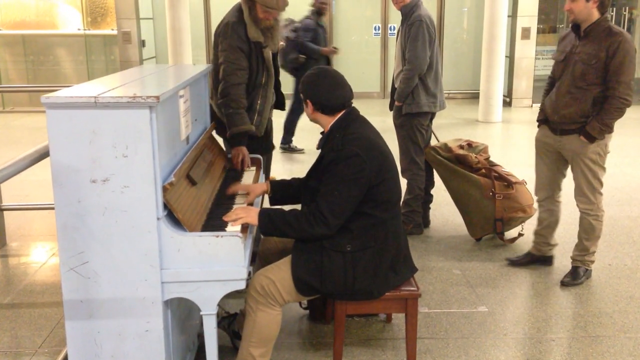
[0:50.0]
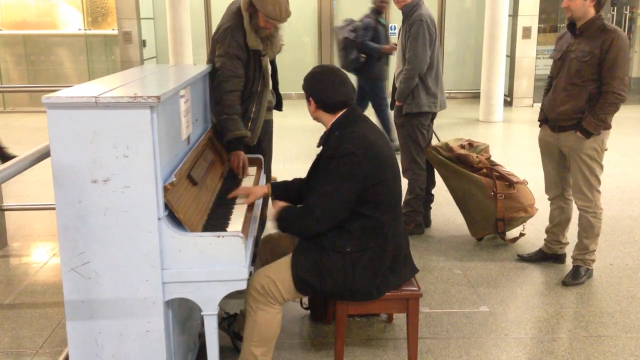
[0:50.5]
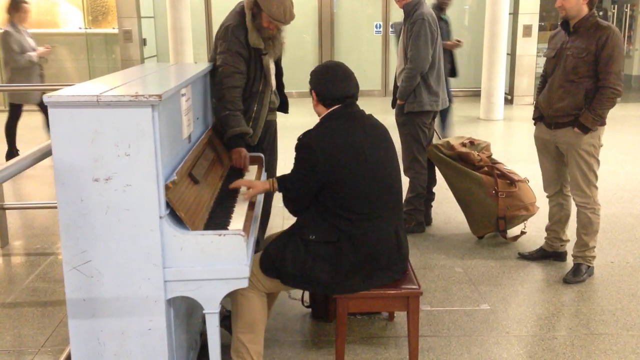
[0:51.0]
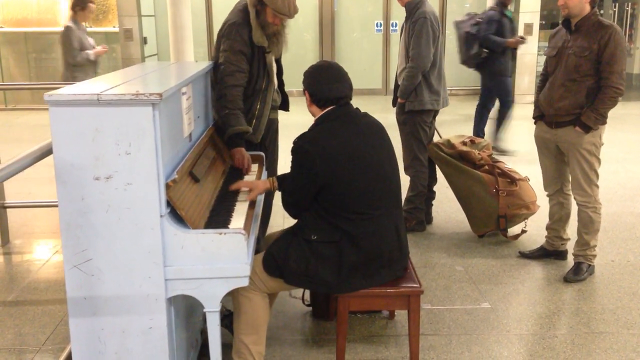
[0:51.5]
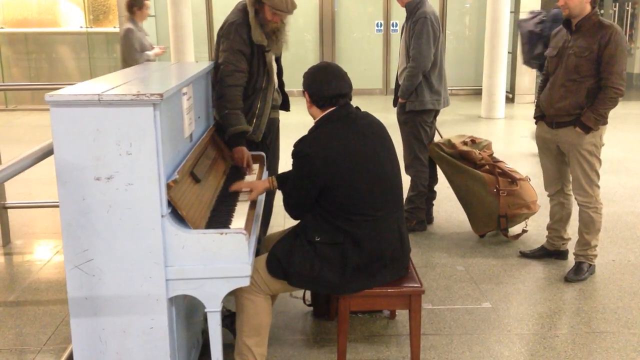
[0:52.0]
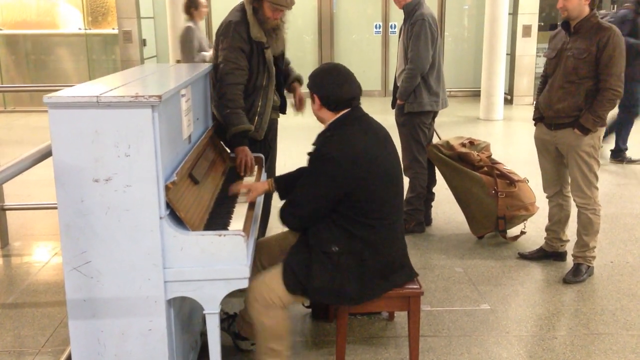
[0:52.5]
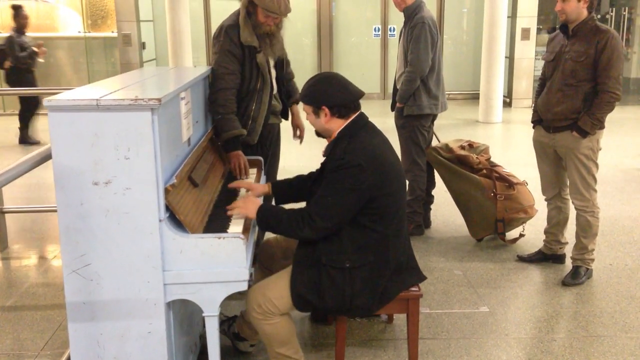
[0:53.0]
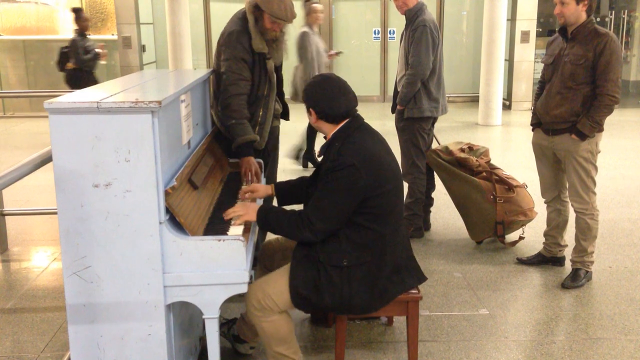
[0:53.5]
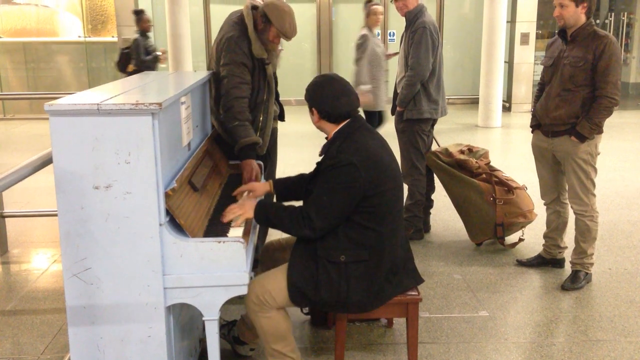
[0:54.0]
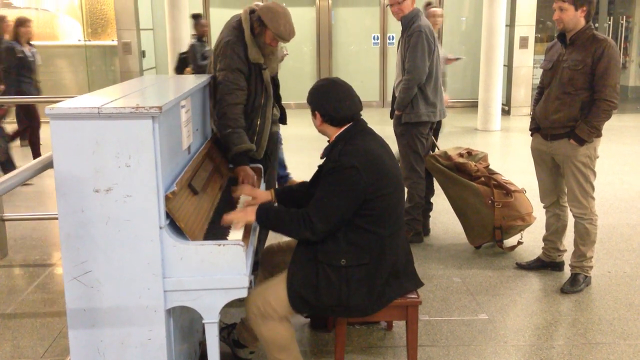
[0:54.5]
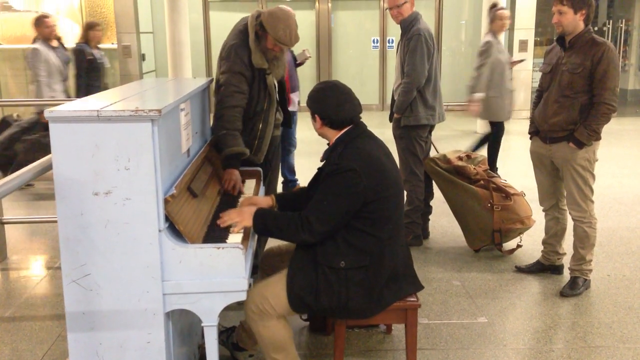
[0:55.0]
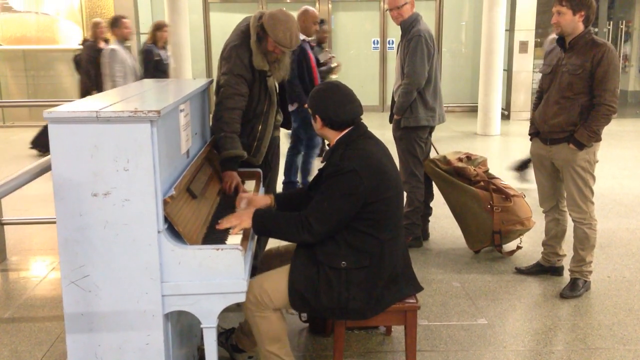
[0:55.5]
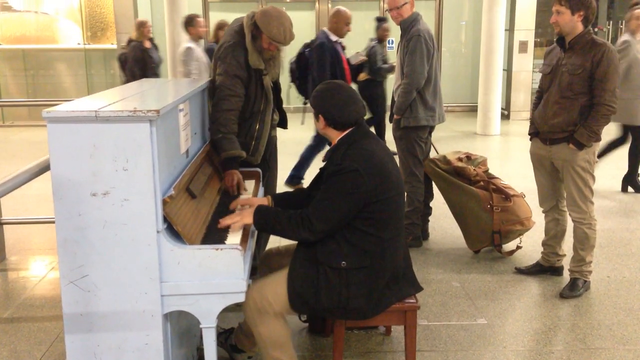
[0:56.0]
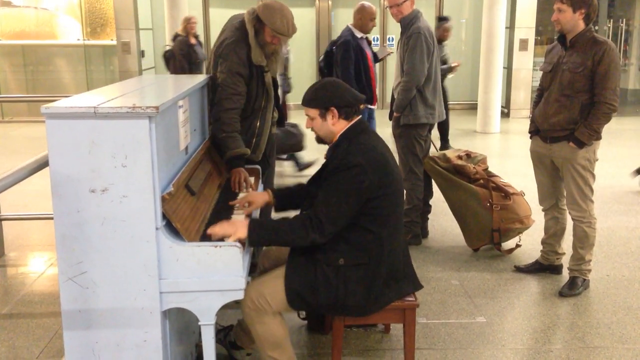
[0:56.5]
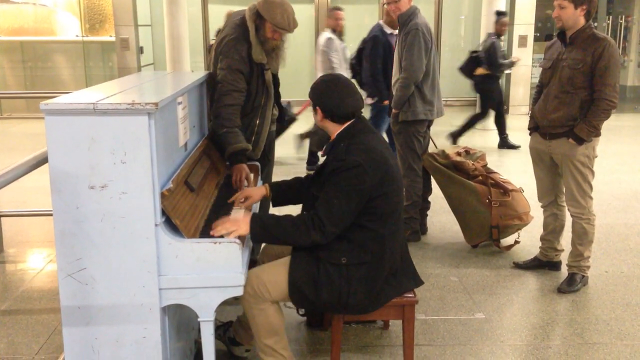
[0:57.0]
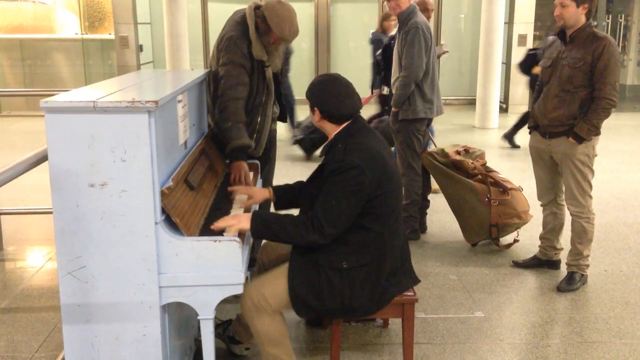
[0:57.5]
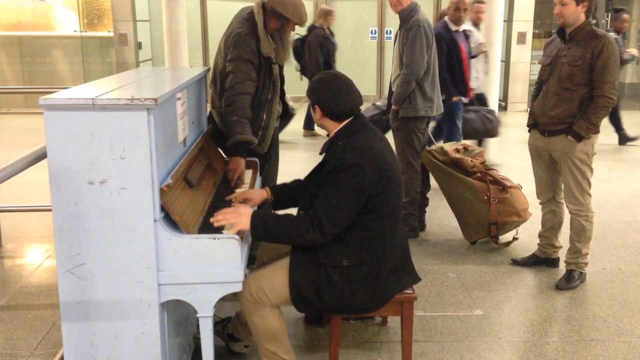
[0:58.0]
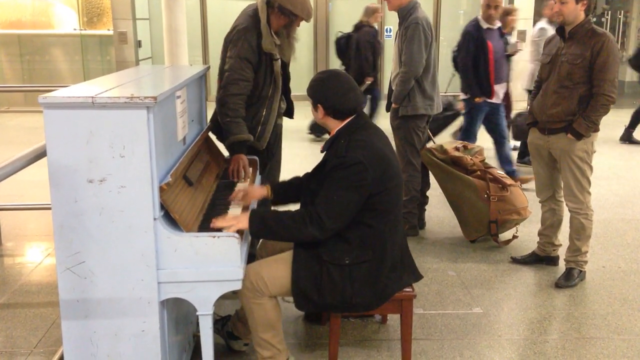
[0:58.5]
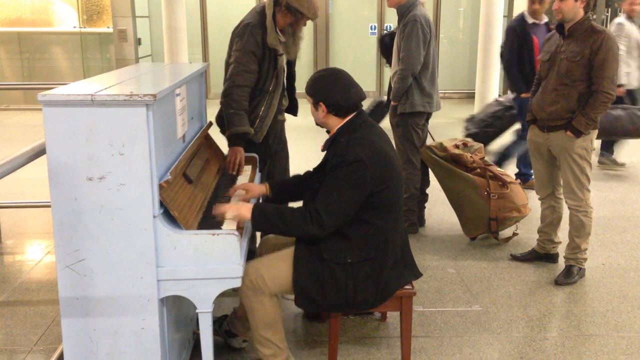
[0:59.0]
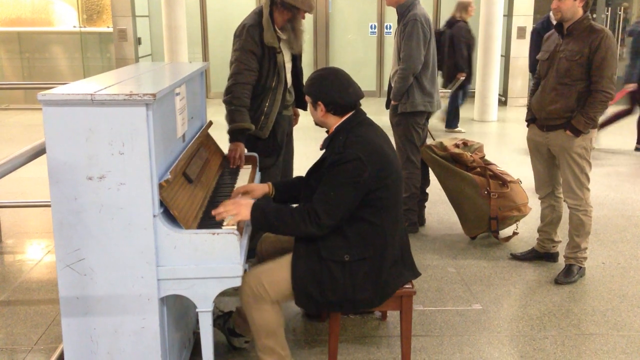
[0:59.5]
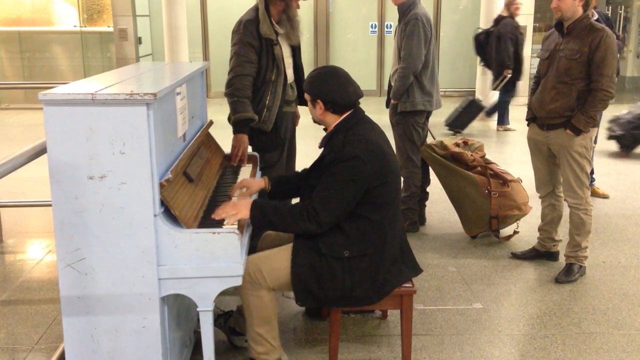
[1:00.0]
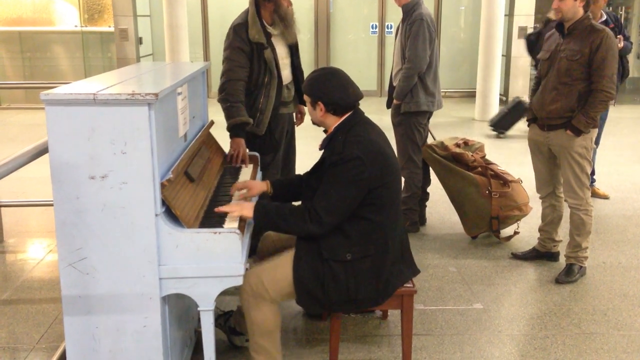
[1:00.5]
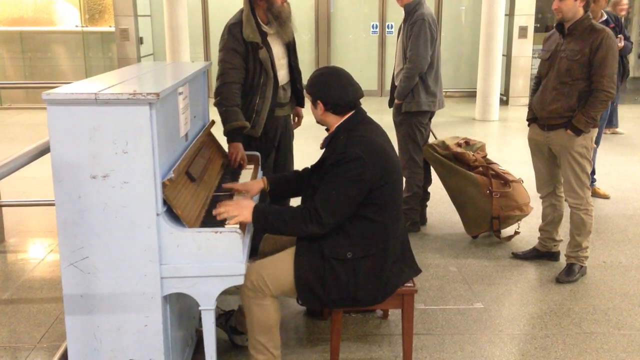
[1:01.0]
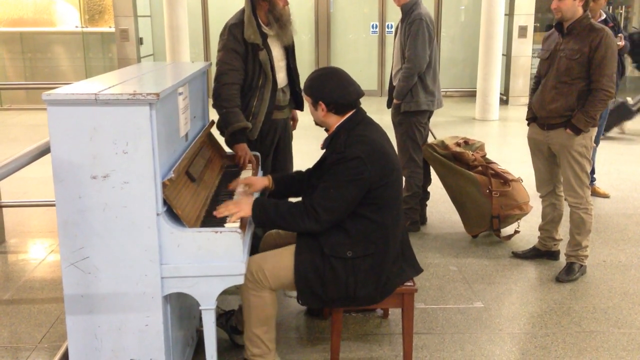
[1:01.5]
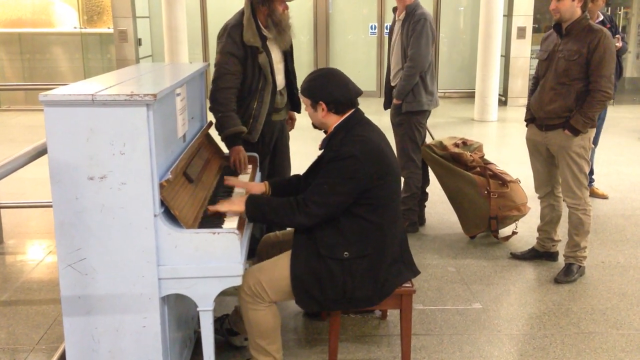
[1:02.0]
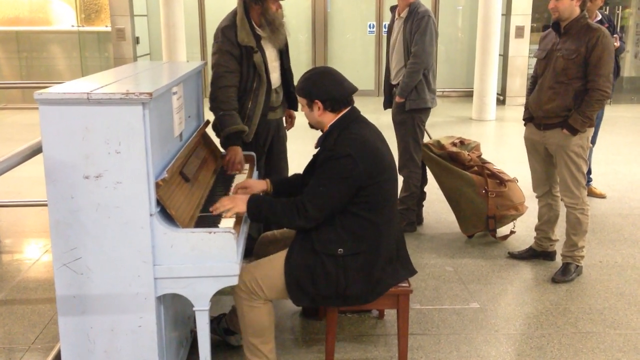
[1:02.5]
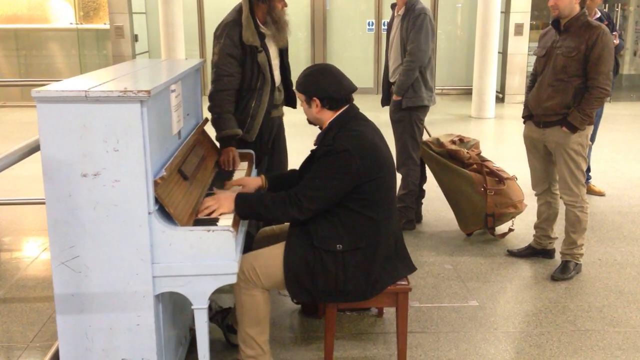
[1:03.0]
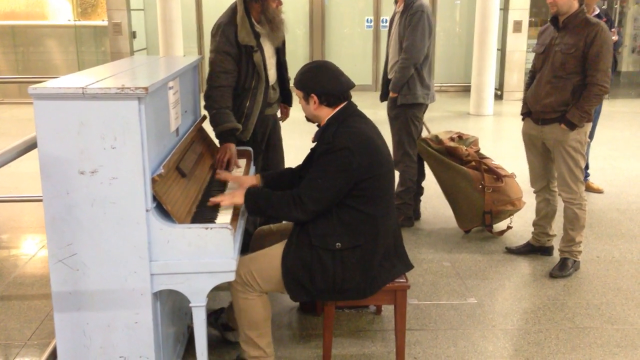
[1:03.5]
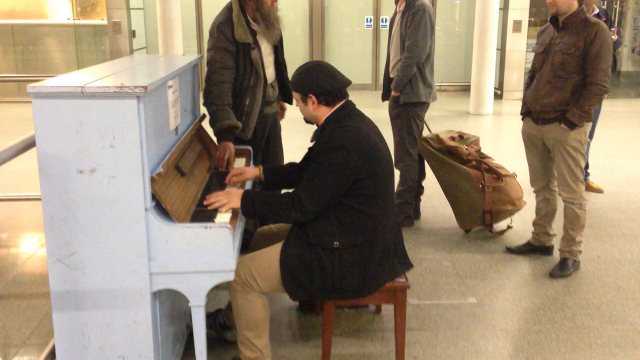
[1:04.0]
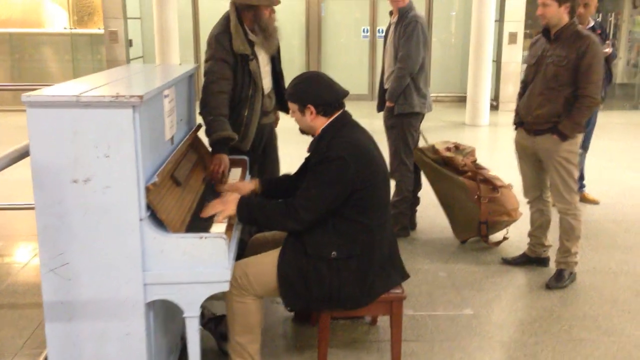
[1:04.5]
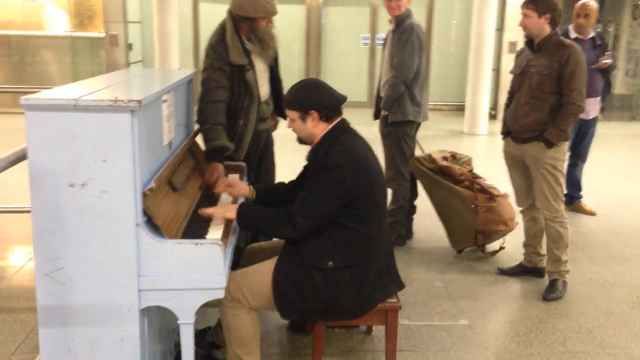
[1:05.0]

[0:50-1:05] The man standing beside him, standing up, plays the right side of the piano and apparently knows what he is doing, his fingers looking like they are literally moving to the music. The two men work together to make a song by playing the left and right sides of the piano at the same time. The man in the black hat and blazer taps along with his feet, keeping the beat on the pedals. In the background people walk by with luggage and backpacks, pulling luggage, and some people stop, look back and stand still for a while watching them play. The two men seem to be having a great time and able to make music together, one standing up and the other sitting on the bench as they play the keys, working together quite well.